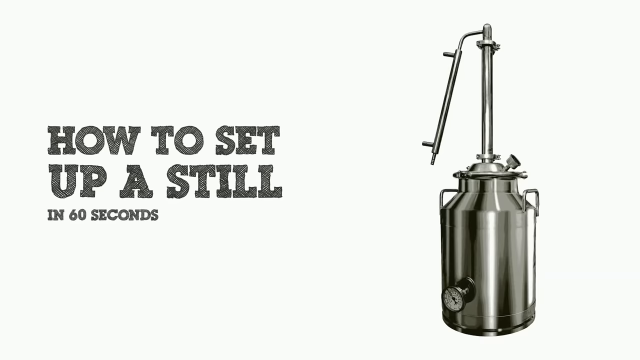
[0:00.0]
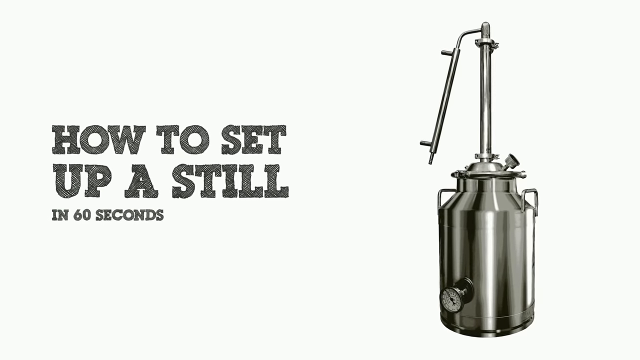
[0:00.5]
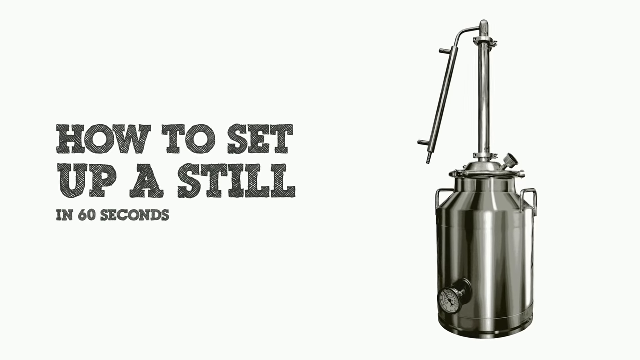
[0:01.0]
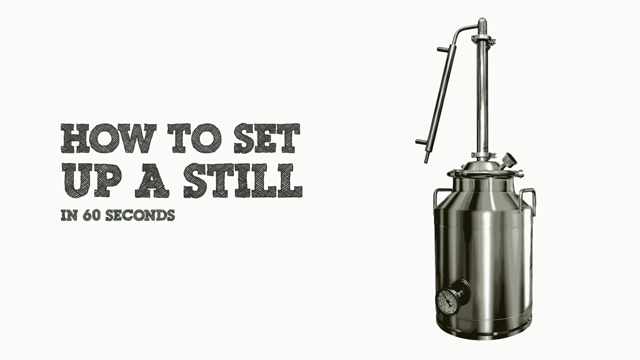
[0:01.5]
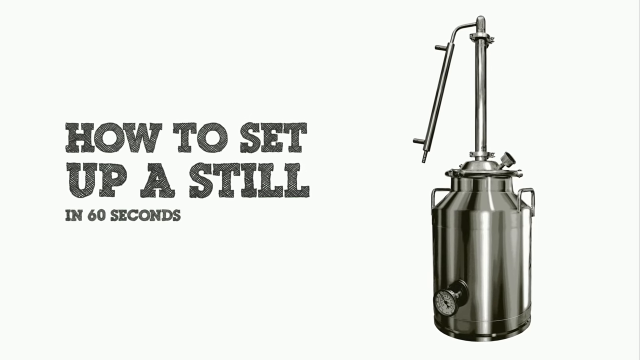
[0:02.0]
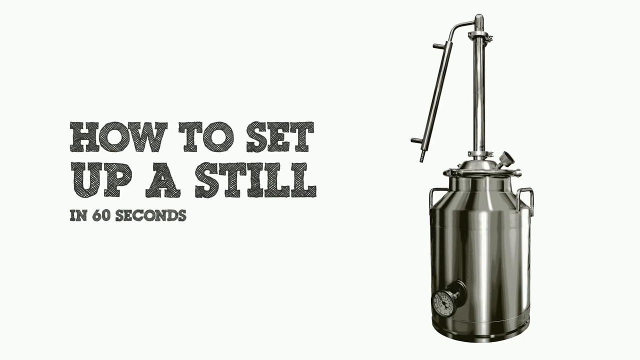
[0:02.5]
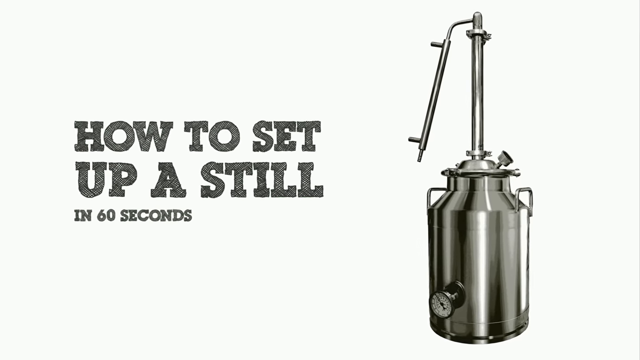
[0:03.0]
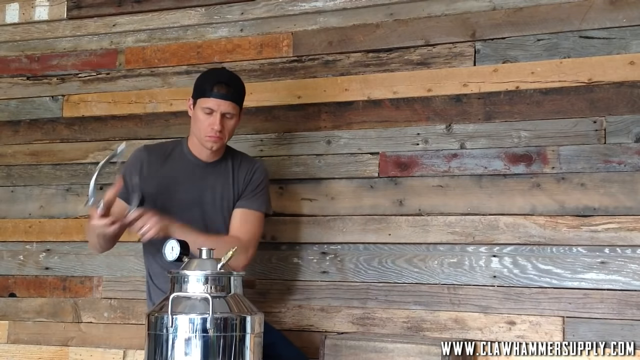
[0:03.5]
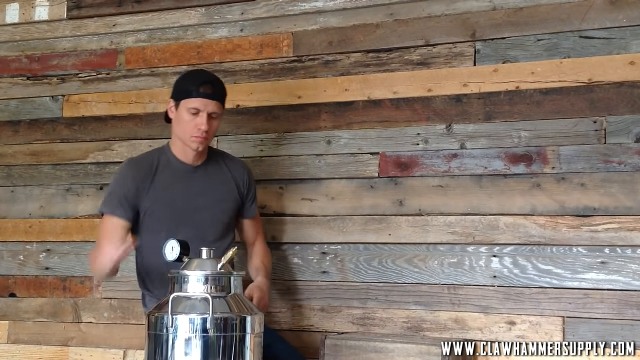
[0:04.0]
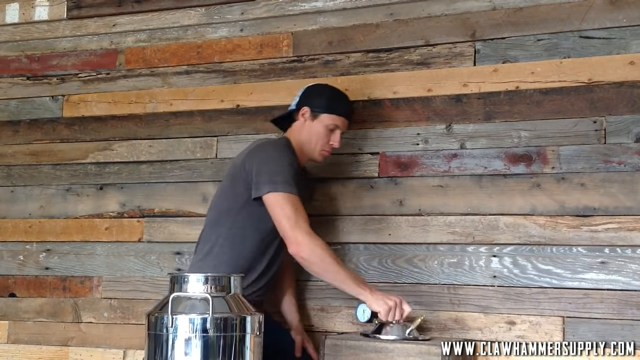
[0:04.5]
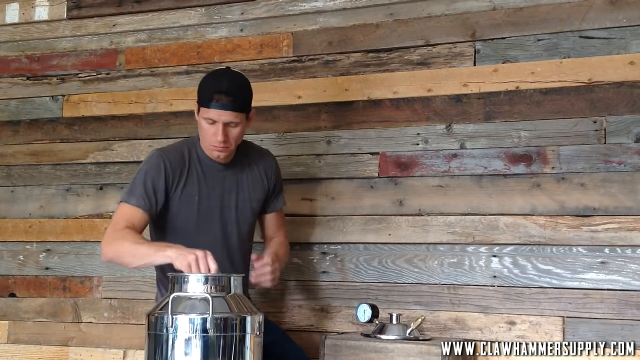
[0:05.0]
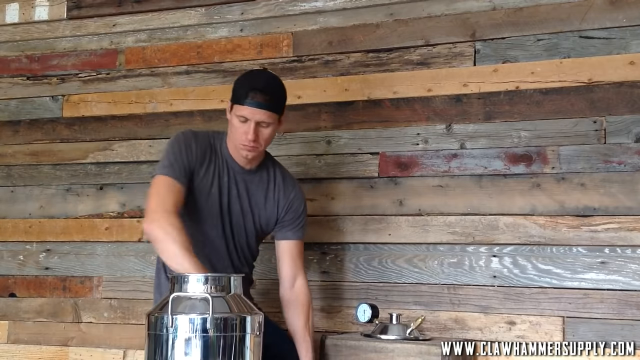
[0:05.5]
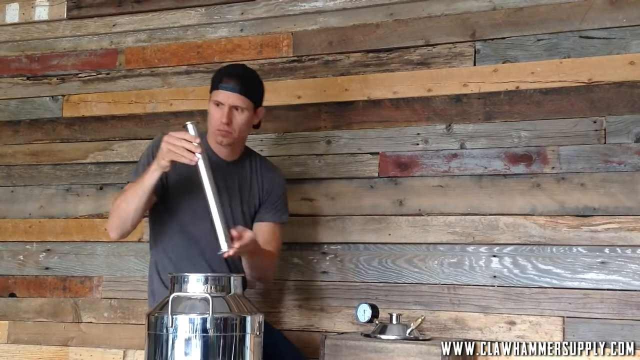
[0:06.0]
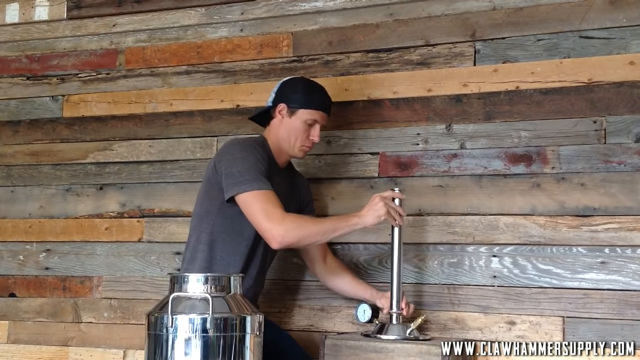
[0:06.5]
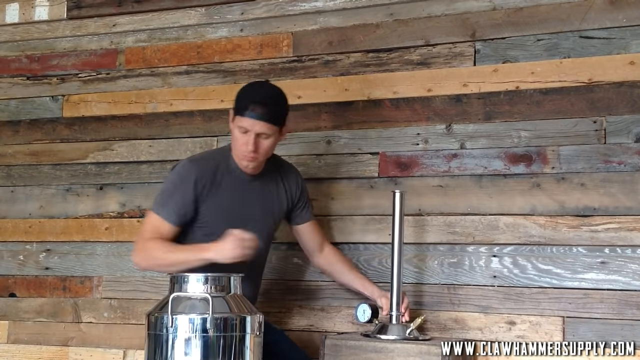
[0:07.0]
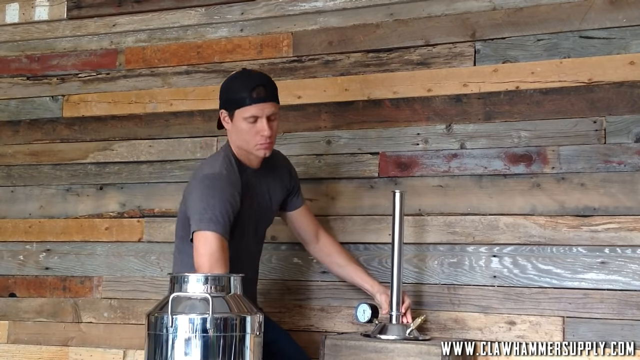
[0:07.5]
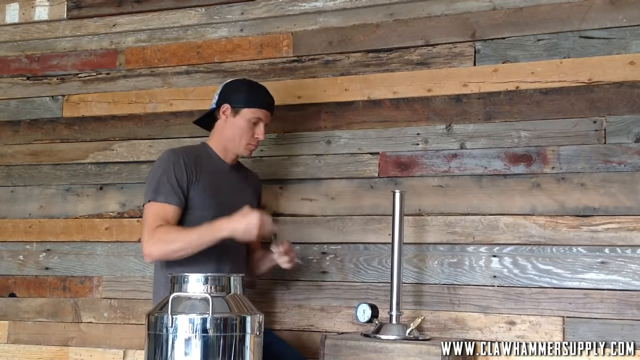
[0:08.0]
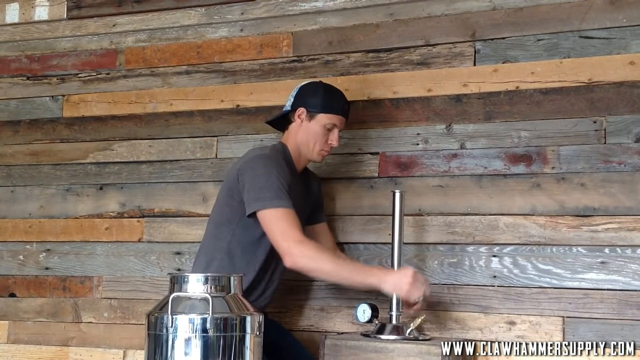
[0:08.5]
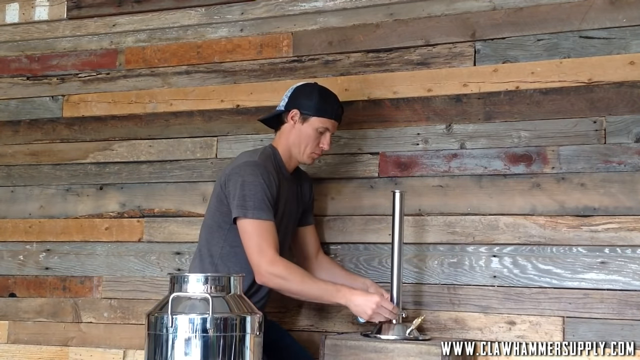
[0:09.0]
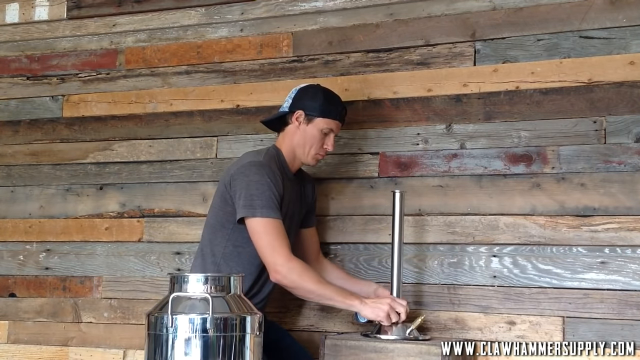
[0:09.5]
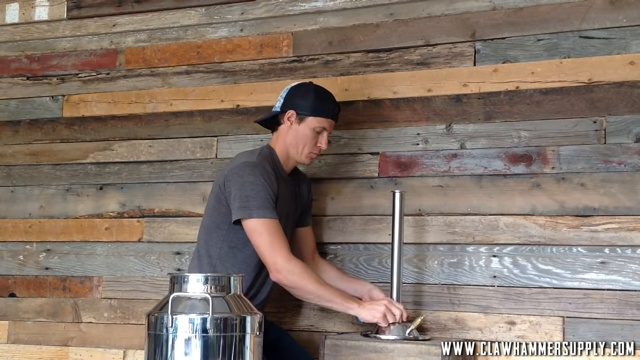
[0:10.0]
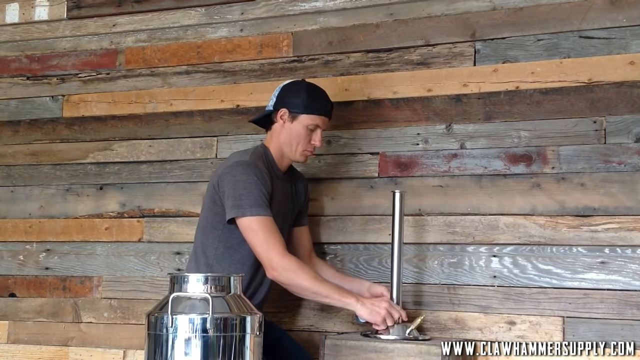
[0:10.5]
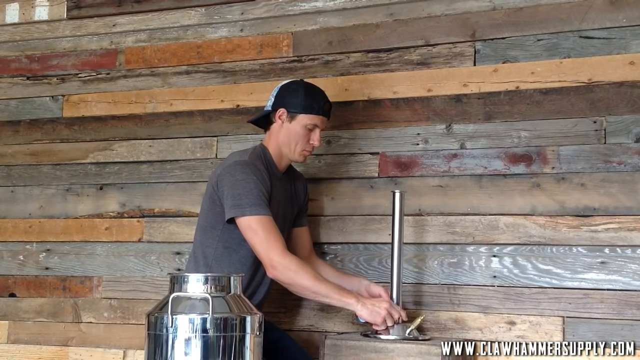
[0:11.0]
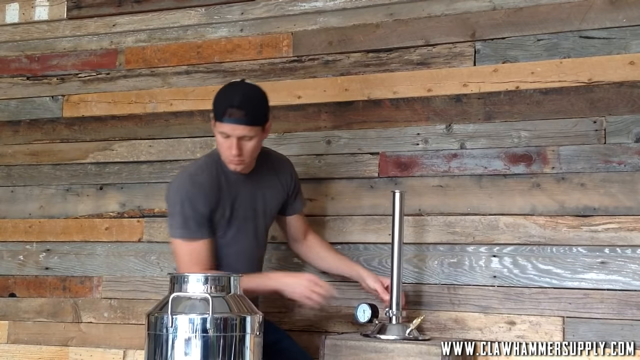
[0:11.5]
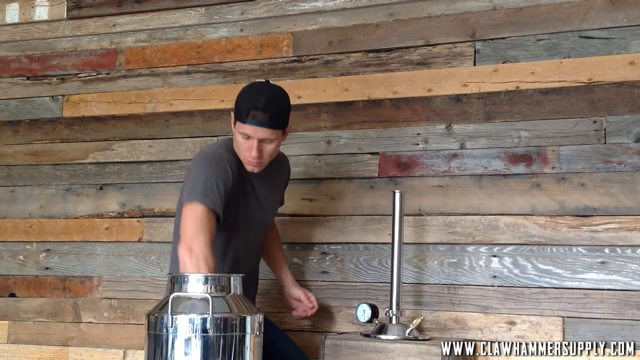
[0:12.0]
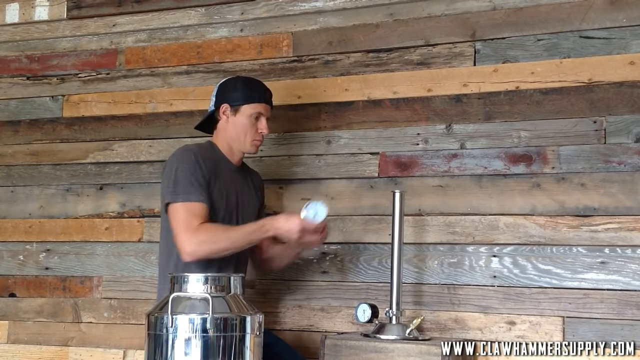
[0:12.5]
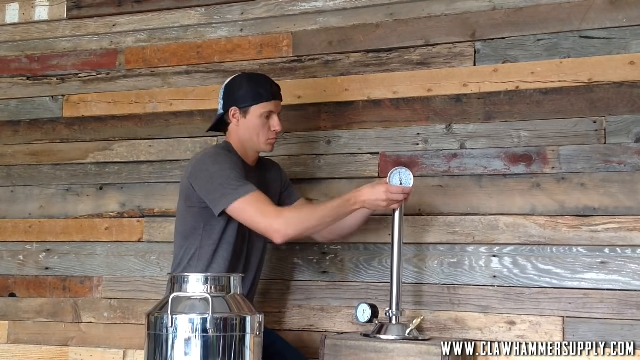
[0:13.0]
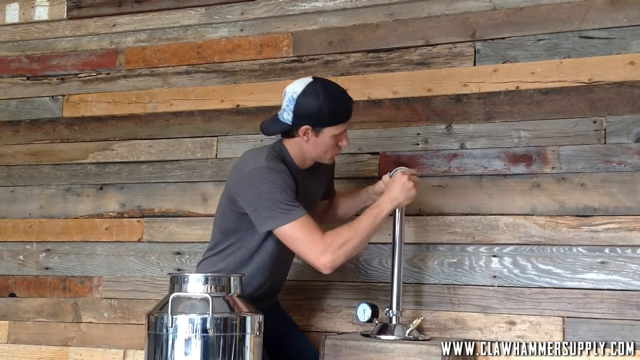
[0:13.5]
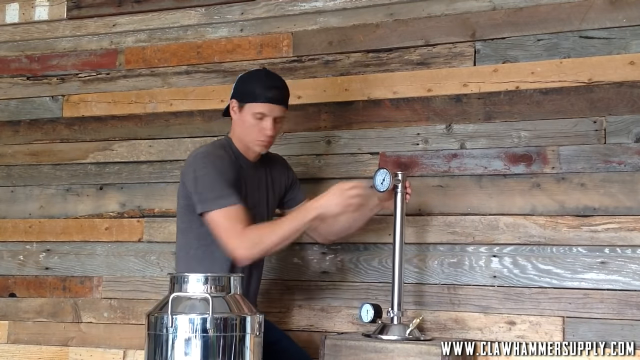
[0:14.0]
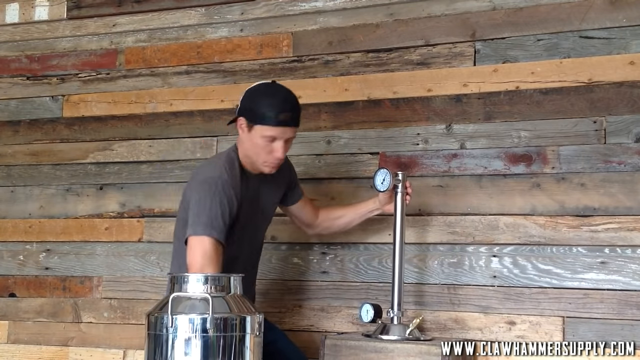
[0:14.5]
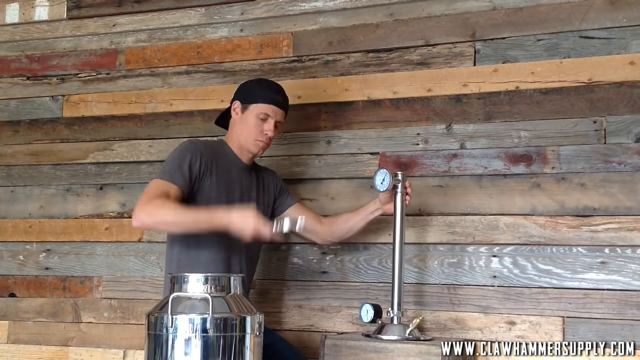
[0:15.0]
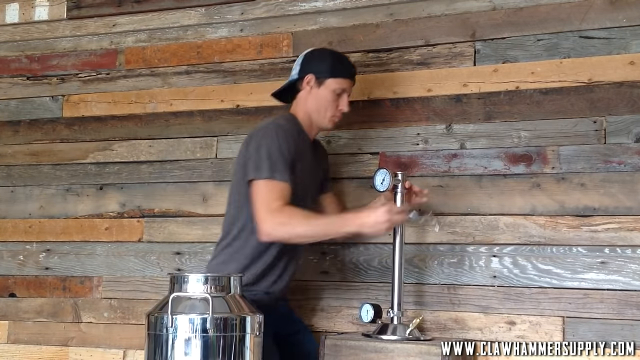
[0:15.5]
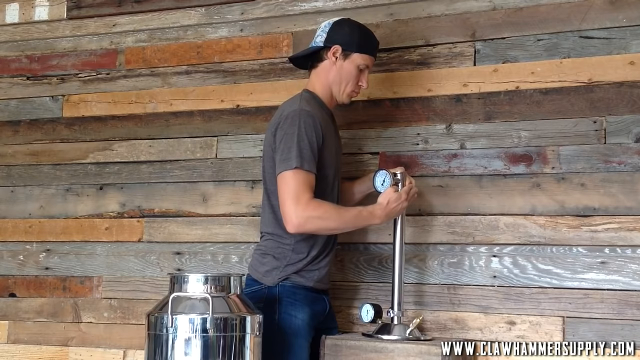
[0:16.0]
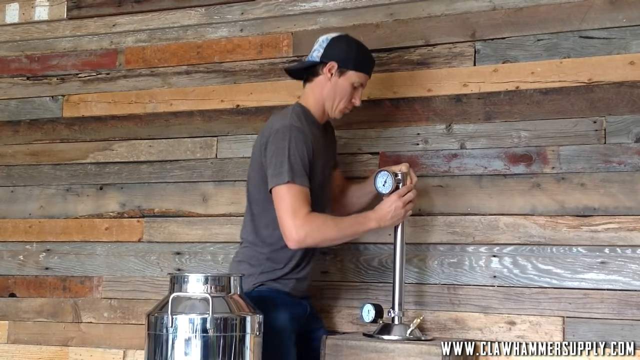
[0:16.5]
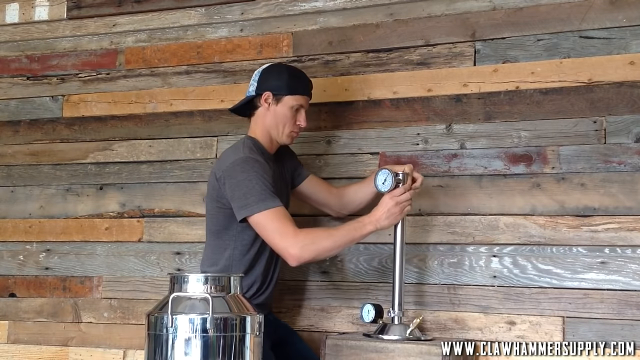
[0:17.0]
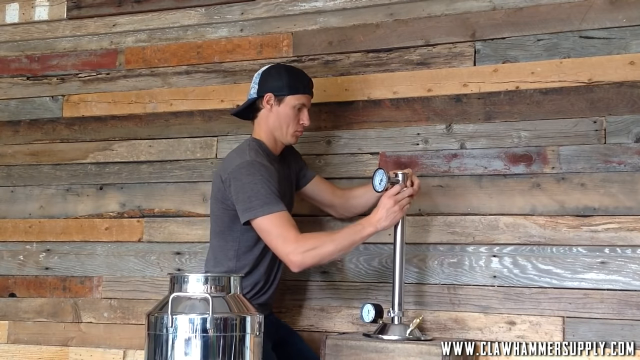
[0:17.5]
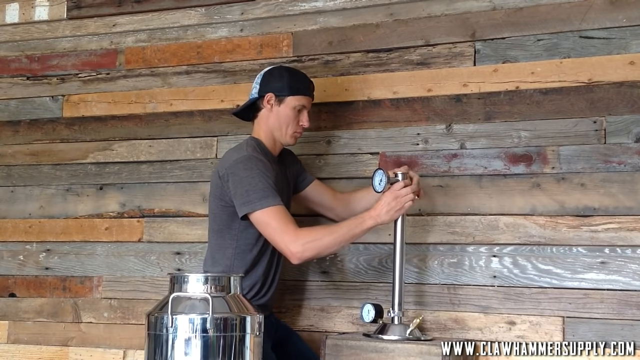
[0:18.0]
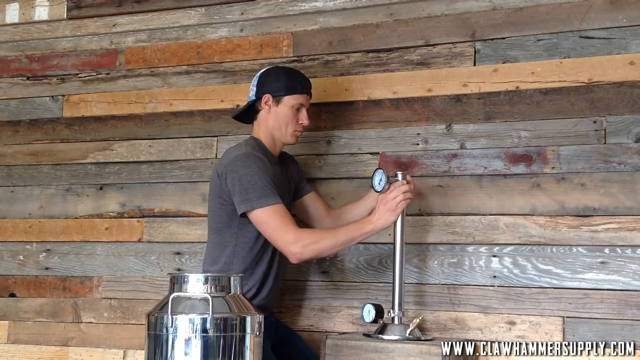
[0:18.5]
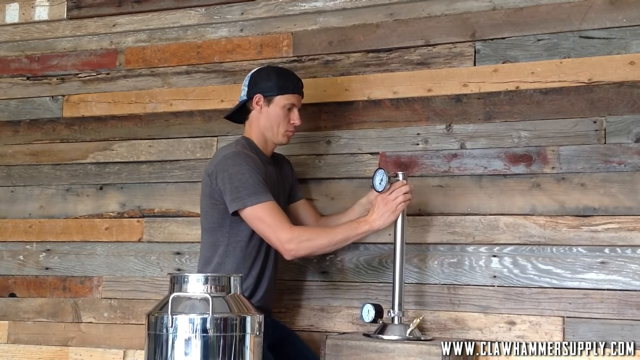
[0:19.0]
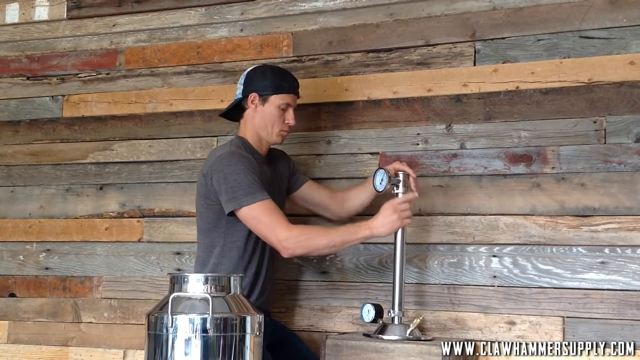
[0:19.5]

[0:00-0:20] The video is very fast and contains no instructions on screen; a person simply shows the process. The opening screen reads "how to set up a still in 60 seconds" in a pencil-shading style on the left. The background is white almost all the way down, then at the bottom goes green and into dark gray. To the right is apparently the still: a silver canister with a temperature or pressure gauge off to the side, what look like possibly silver handles, and on top what looks like possibly another pressure or temperature gauge. From there a big rod goes all the way up, with a skinny piece going off to the side and a longer rod. The pieces then move together. Next a man appears against a wood background, wearing a backwards black baseball cap and a gray t-shirt; he is a younger white man, probably in his late 20s or early 30s. Only the very top part of the still is visible. He reaches into it and takes out parts, including the cap with the pressure gauge and the rod that was inside. He puts the rod on the cap, screws something onto the bottom of the rod, then puts either a temperature gauge or a pressure gauge on top of the rod, apparently screwing it in place. He then adds some kind of bracket to keep it steady and stop it from falling off.